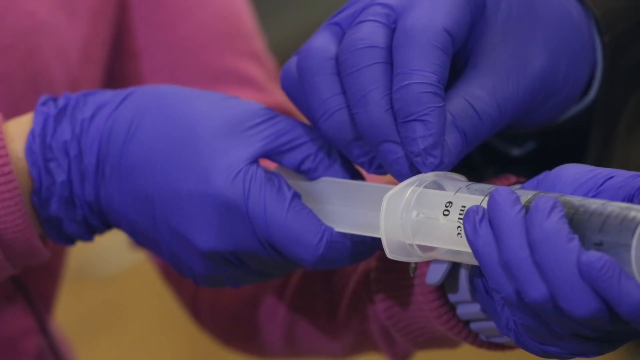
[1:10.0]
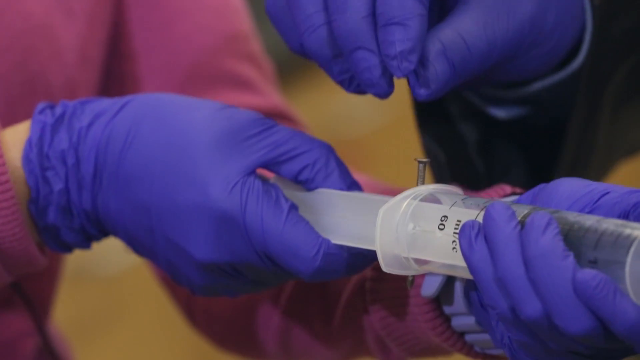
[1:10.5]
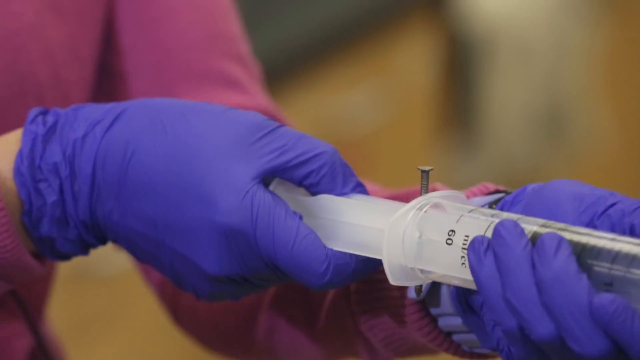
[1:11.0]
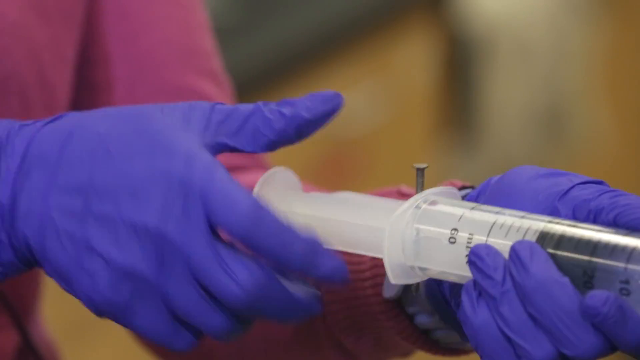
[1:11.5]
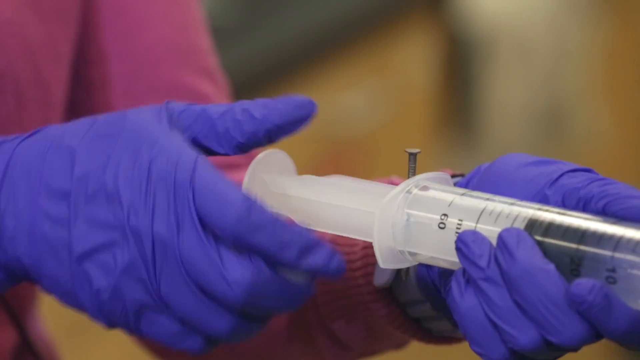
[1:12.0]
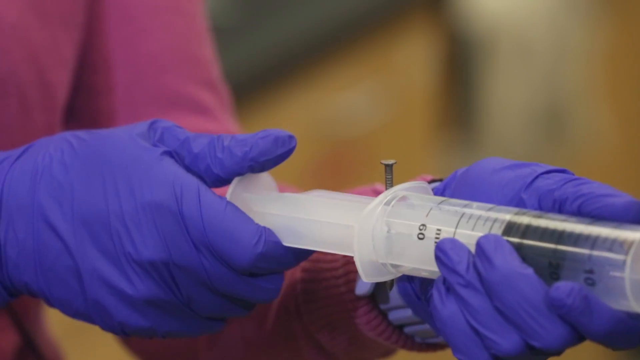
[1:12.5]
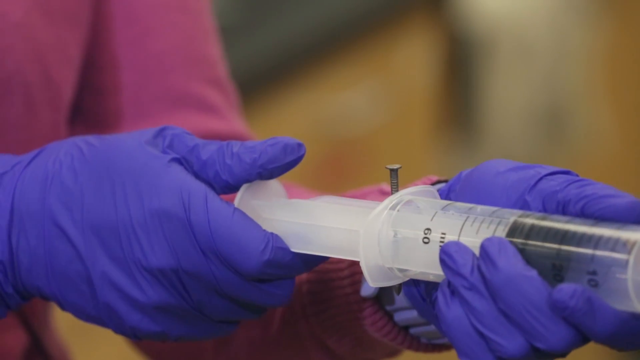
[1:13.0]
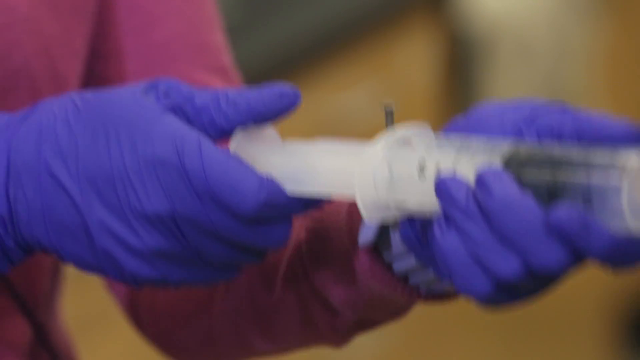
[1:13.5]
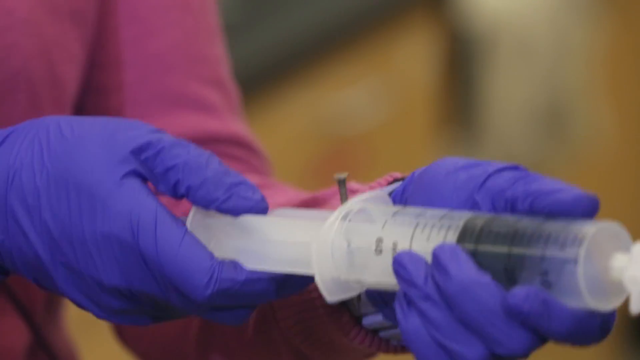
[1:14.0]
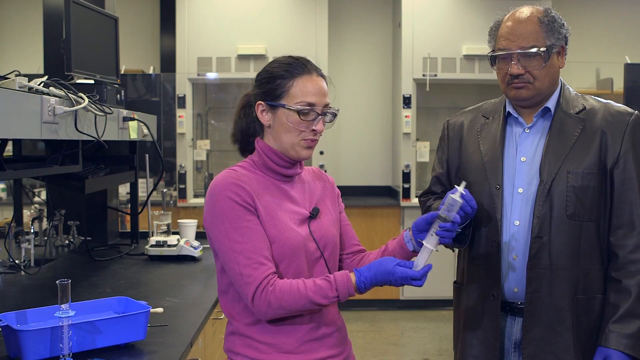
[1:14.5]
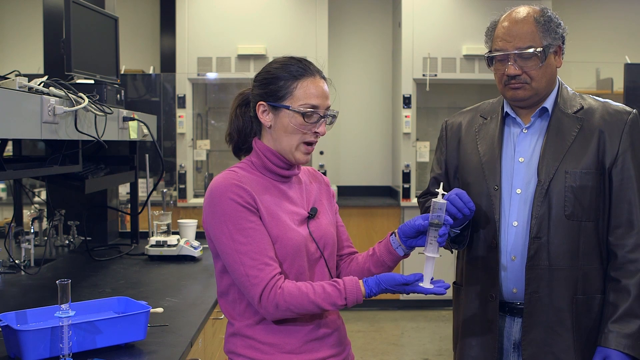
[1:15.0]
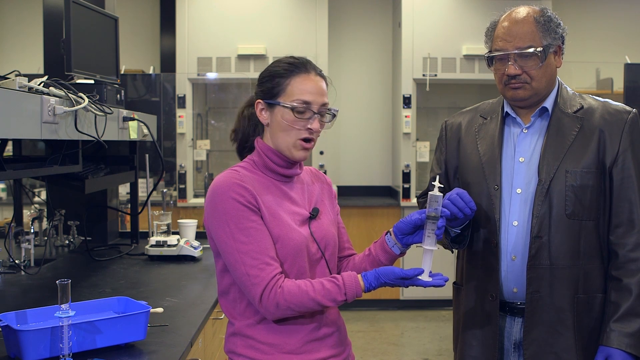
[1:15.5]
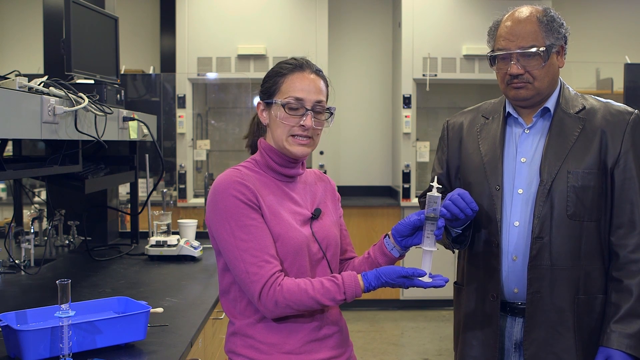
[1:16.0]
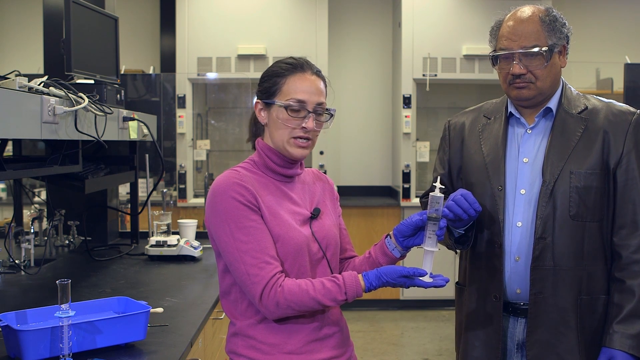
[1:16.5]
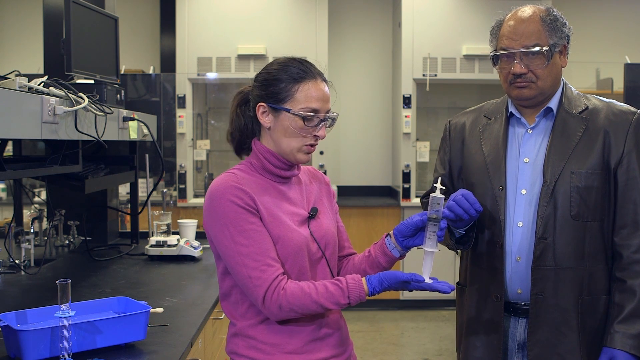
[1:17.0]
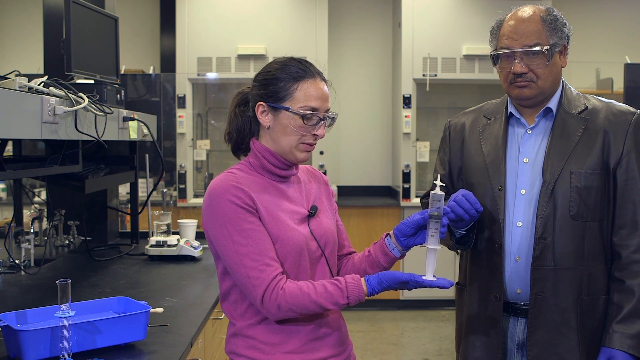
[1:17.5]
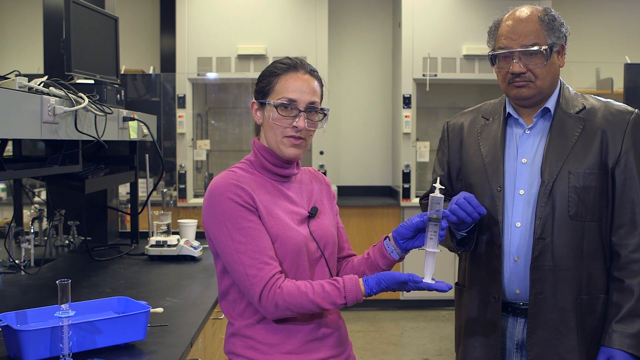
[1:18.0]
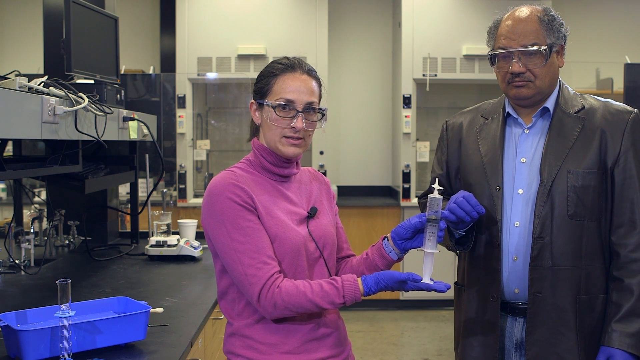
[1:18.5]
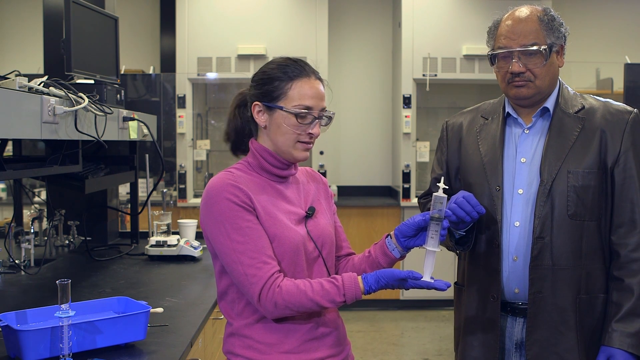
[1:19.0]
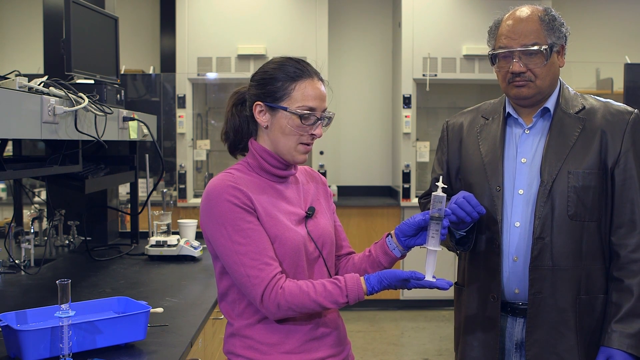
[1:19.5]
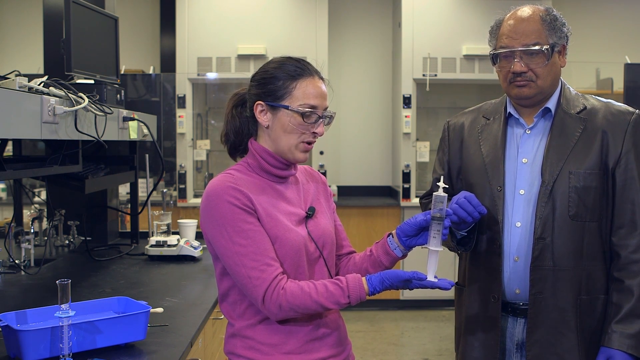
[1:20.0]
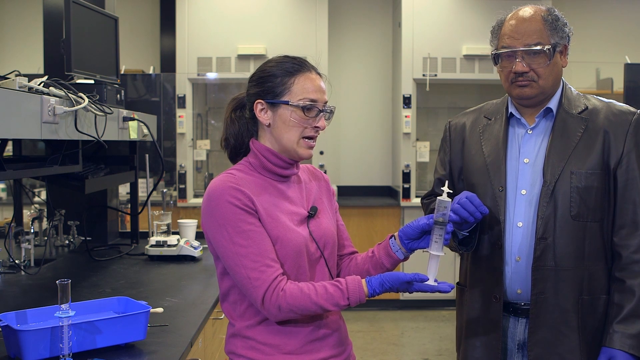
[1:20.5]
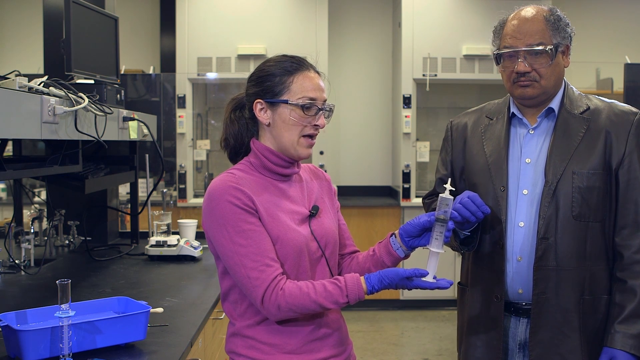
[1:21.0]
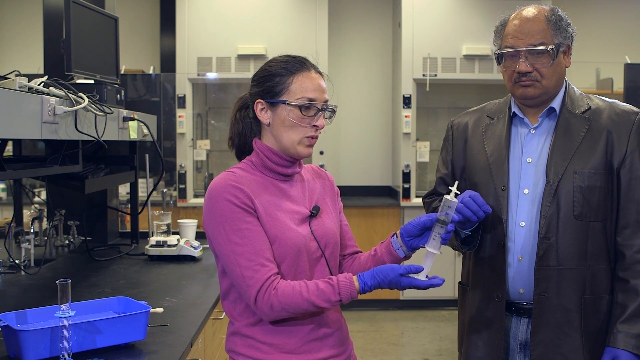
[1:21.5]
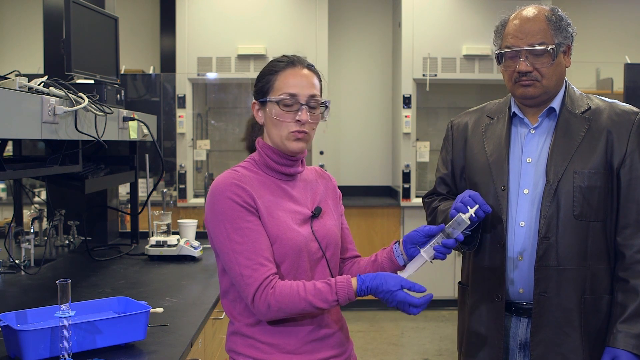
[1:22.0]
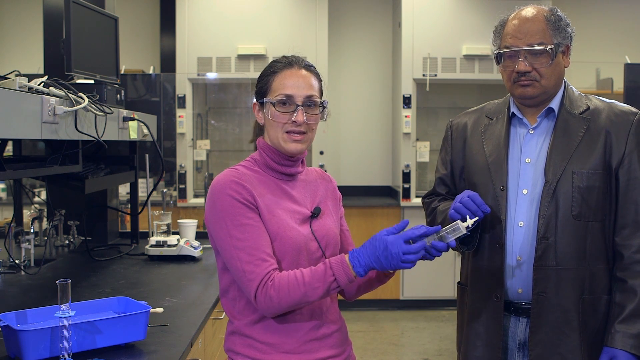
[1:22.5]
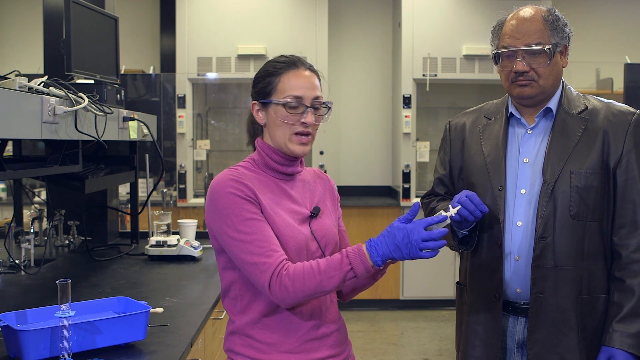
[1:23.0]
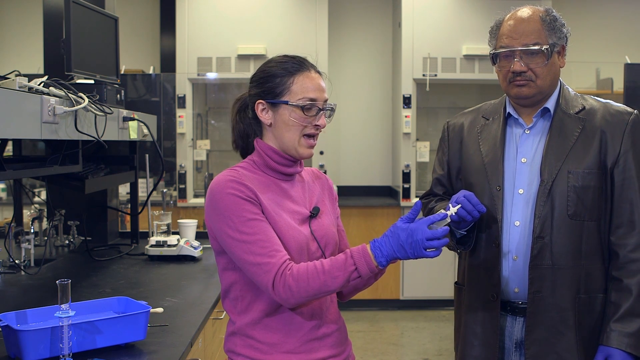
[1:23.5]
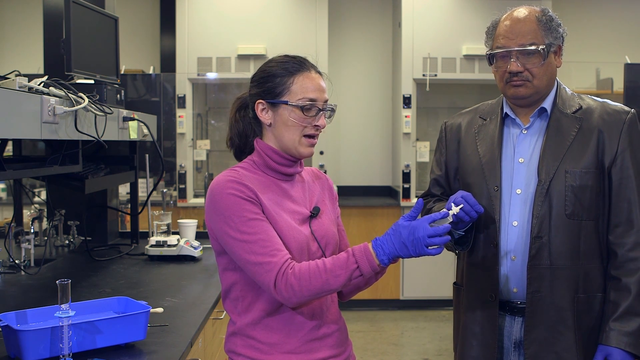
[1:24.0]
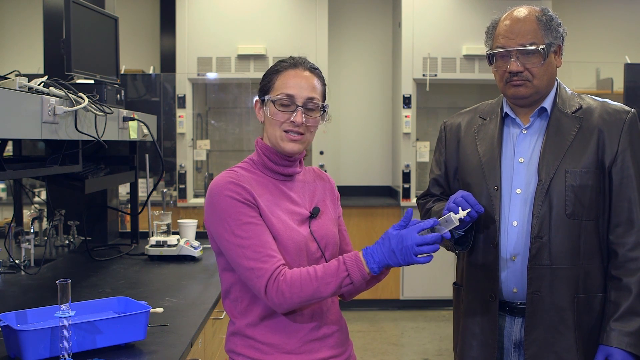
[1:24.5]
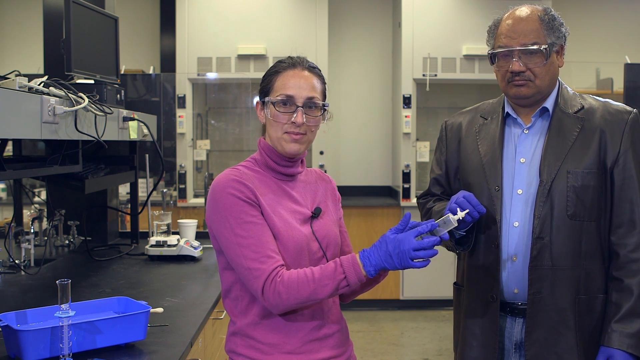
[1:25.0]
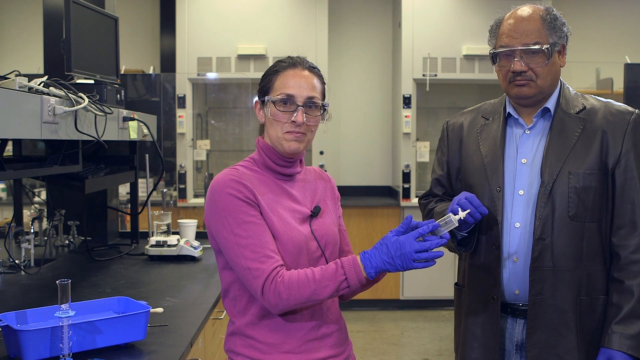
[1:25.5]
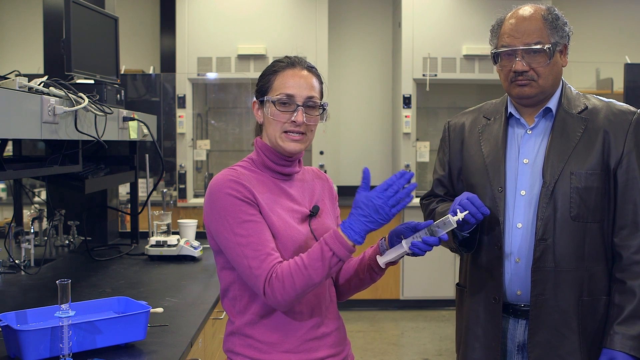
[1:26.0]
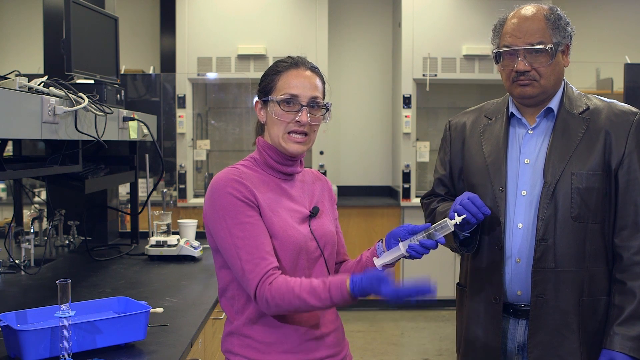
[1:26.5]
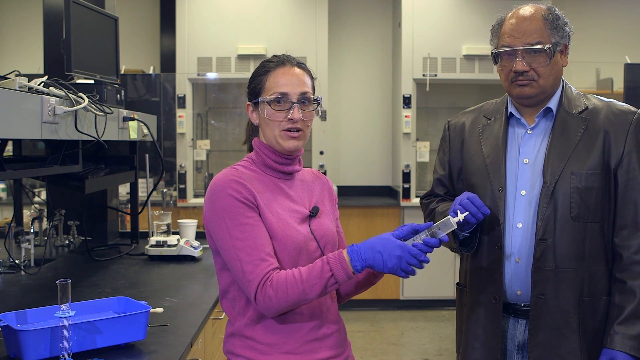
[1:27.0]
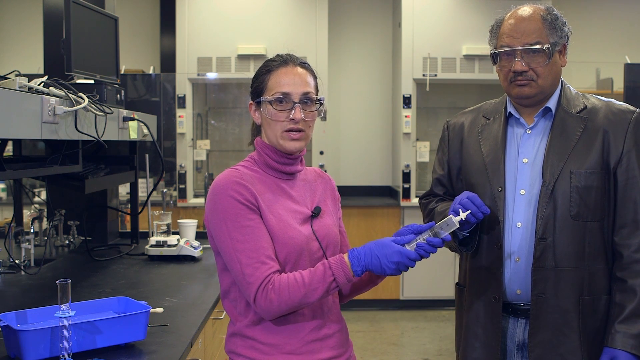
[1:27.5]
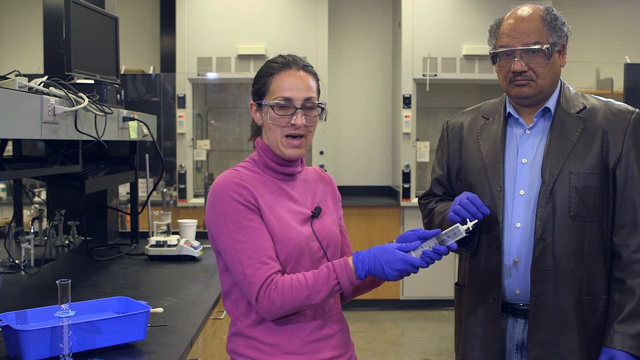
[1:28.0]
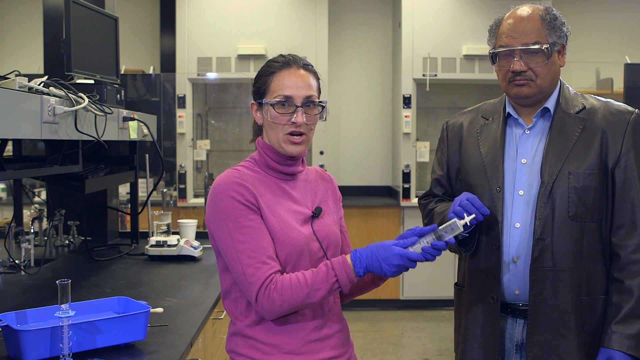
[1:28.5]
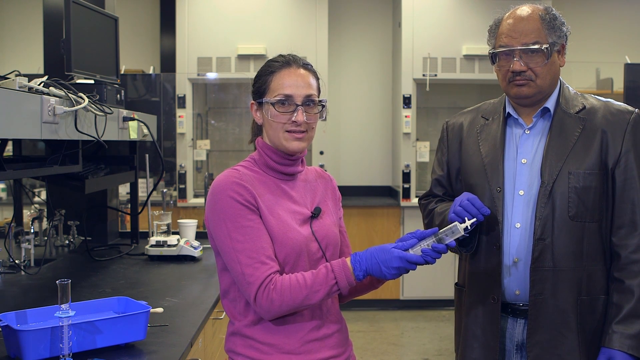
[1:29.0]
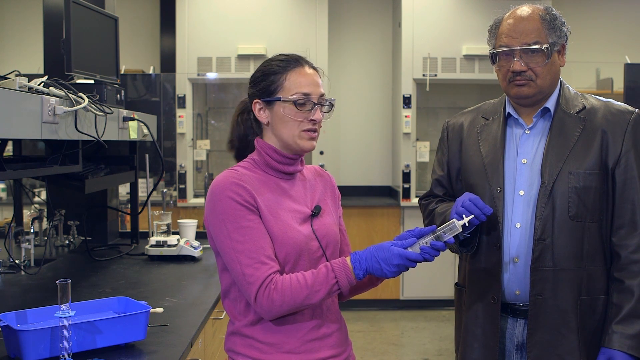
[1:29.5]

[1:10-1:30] The man's hand pulls away after he has put the object, which appears to be a nail, into the plastic syringe. It is stopping the syringe from pushing down all the way. The next shot shows the woman and the man in the room. She puts the end of the plunger on her right hand and holds the syringe vertically as she talks to the camera, apparently showing the viewer what they have done. She then points to the top of the syringe and makes hand gestures with her right hand as she talks. The man is still standing with his right hand up to his chest, wearing the blue disposable gloves, and simply stares at the camera as she talks.